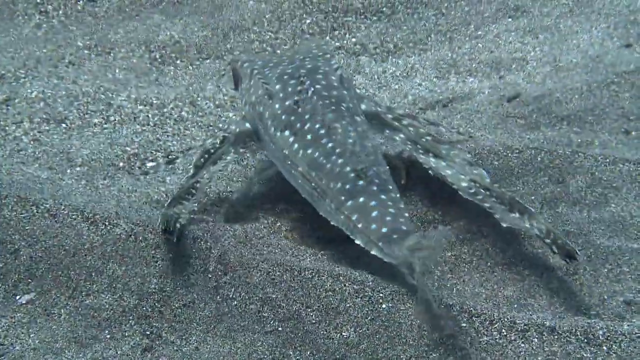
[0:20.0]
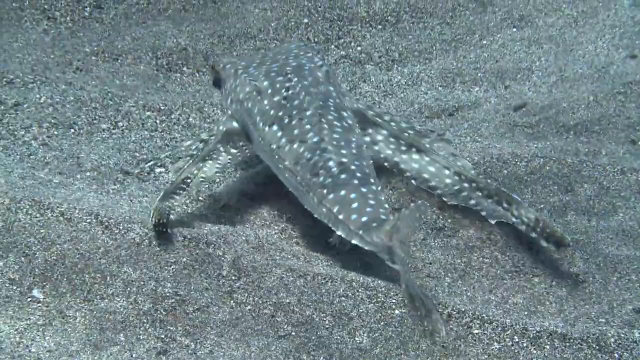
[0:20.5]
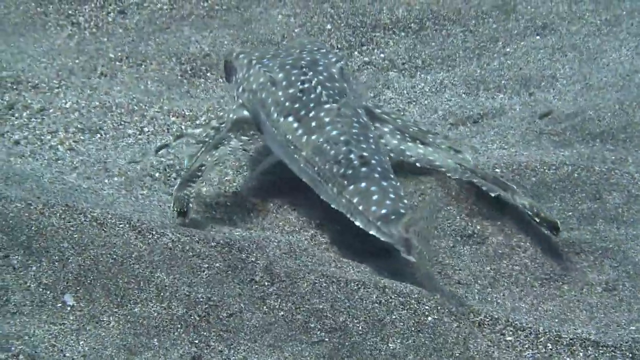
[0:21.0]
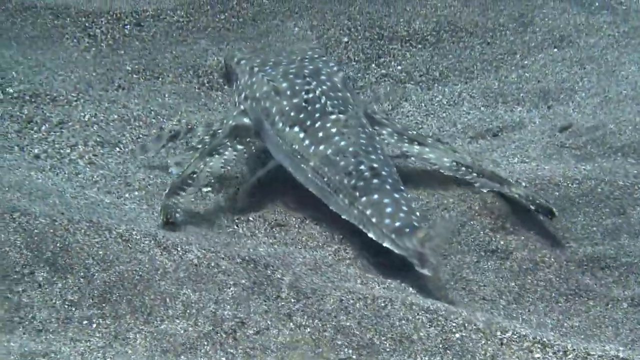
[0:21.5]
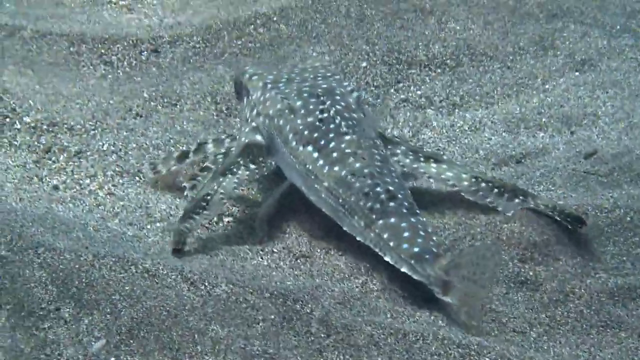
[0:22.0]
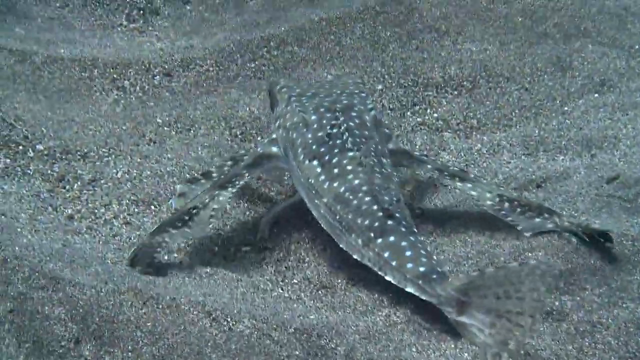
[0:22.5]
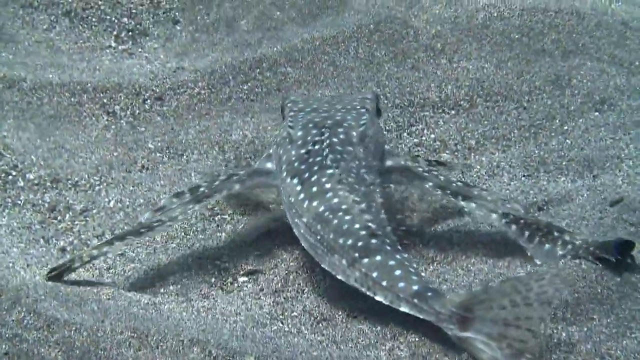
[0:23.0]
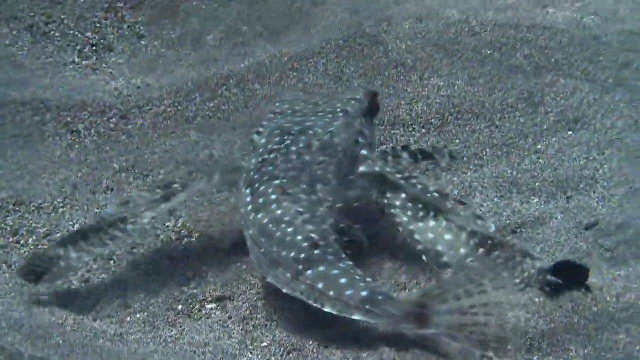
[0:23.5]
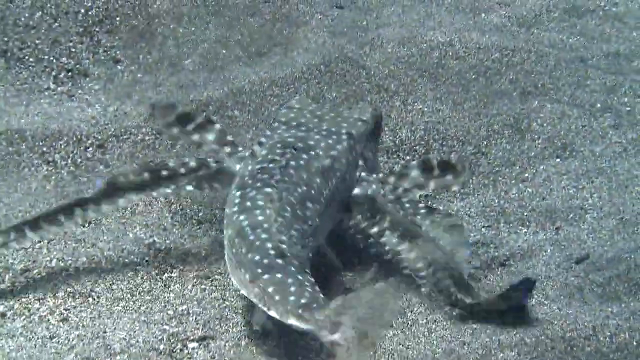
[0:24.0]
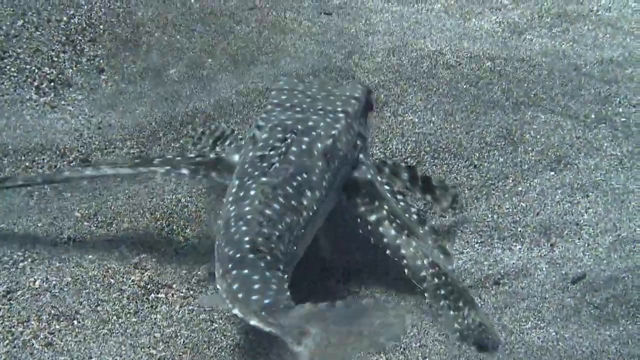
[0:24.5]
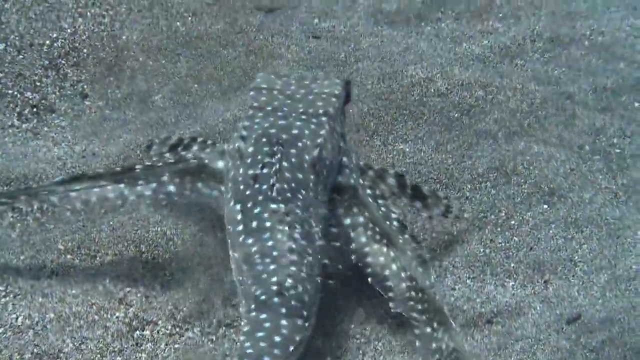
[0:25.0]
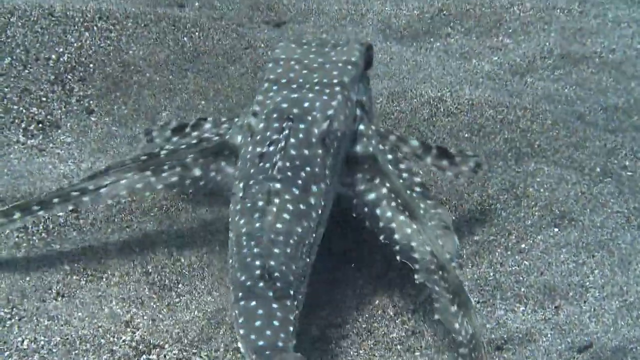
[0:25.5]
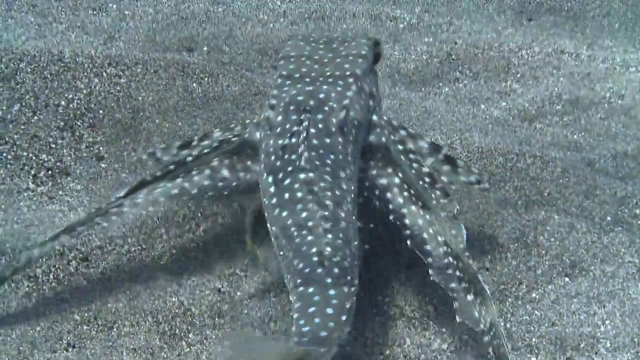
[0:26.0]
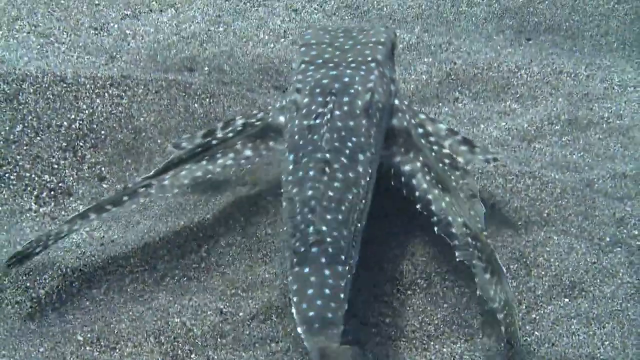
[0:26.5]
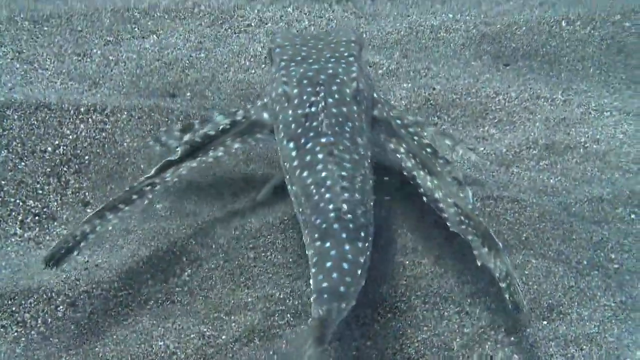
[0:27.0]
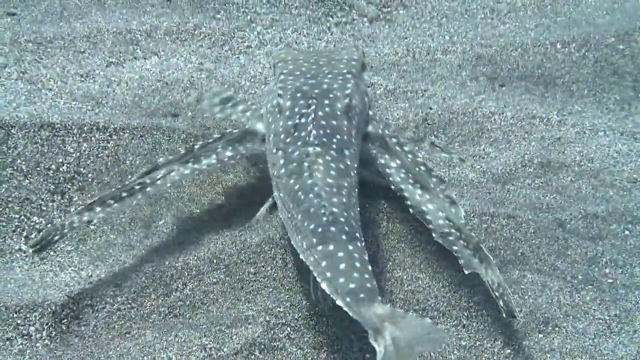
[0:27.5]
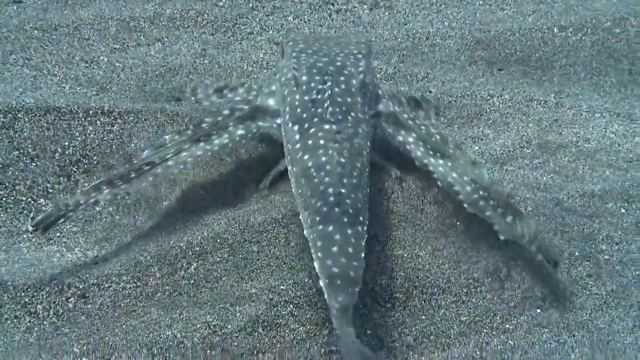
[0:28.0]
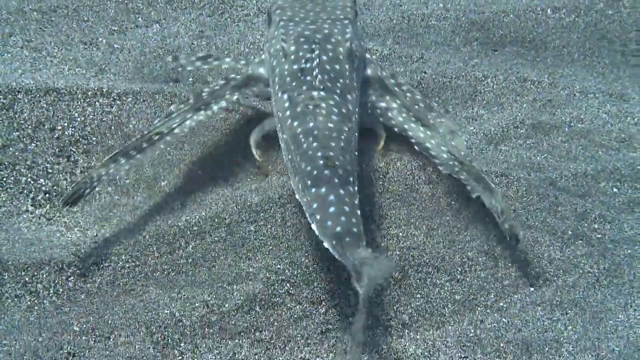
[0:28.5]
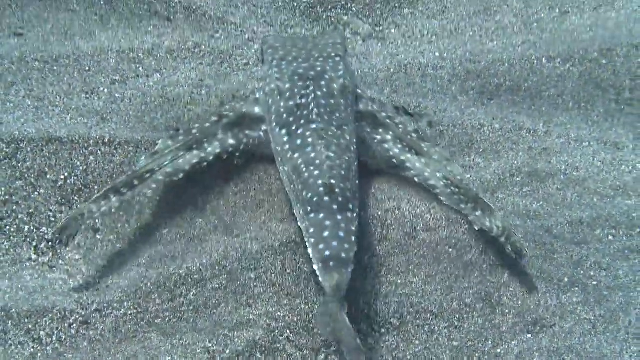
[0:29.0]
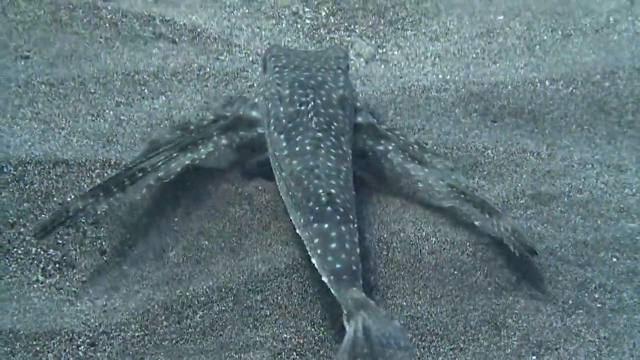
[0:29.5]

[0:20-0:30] A fish in the ocean resembles several different types of fish at once. It looks like a bottom-dwelling fish, yet its very long fins on the right and left sides of its body make it look like it could be a flying fish, while its body very much resembles a puffer fish. It swims along the ocean floor, and the person filming kind of follows it along the sandy bottom. It appears to have several long fins coming out of the right and left sides of its body, two fins underneath that it uses to kind of walk along the sand, and two other fins up toward its eyes that it uses to brush sand away.